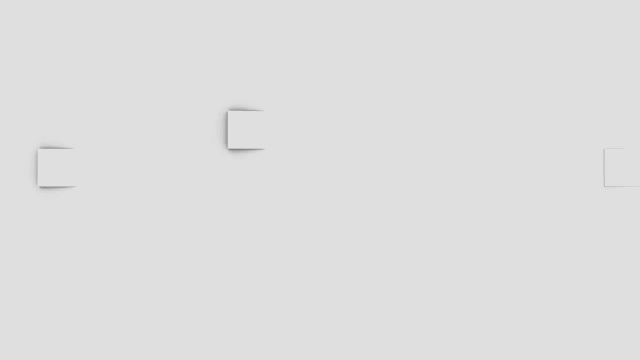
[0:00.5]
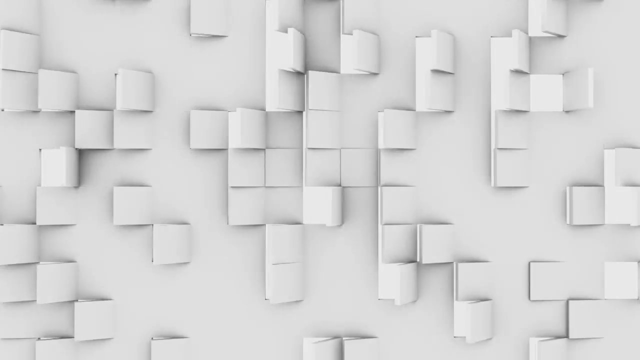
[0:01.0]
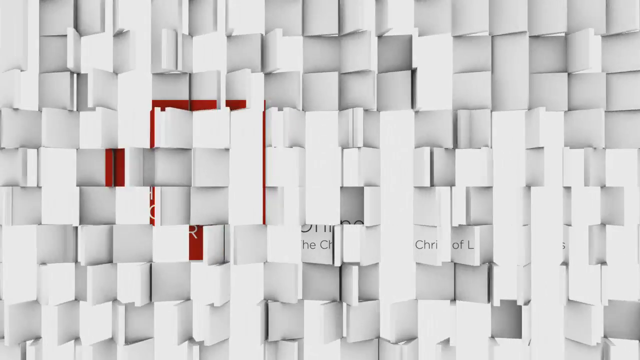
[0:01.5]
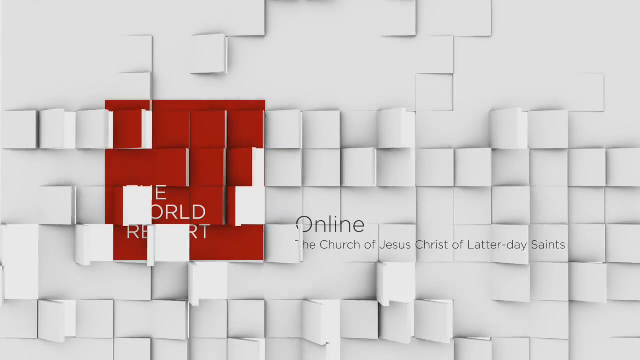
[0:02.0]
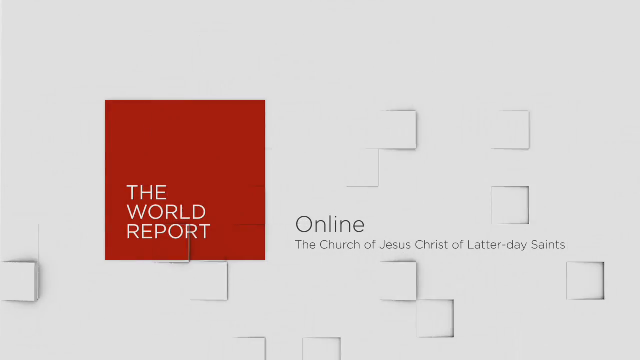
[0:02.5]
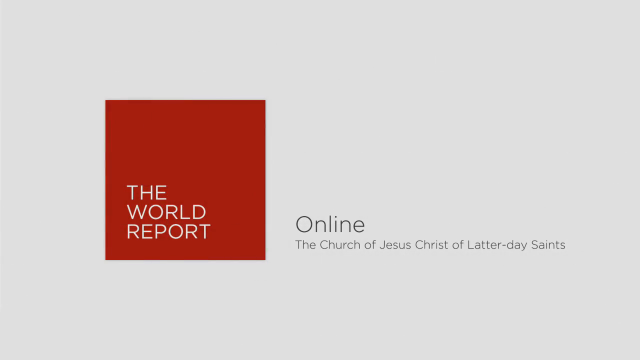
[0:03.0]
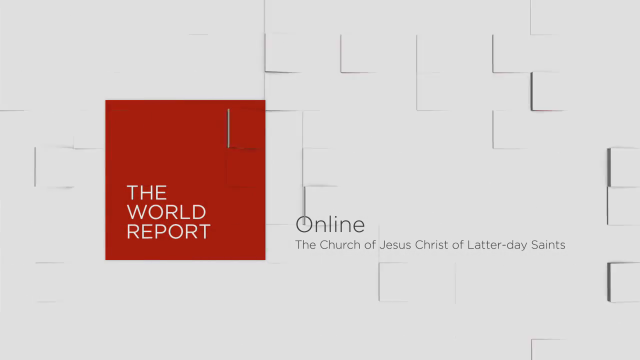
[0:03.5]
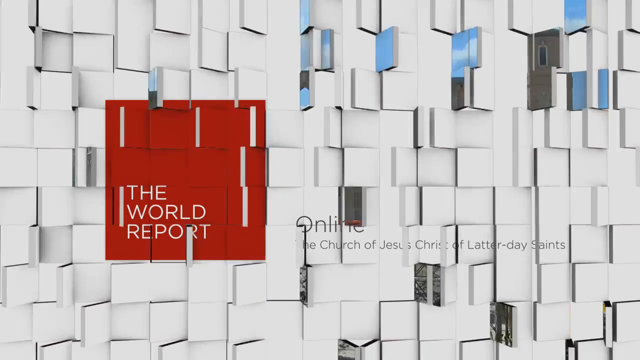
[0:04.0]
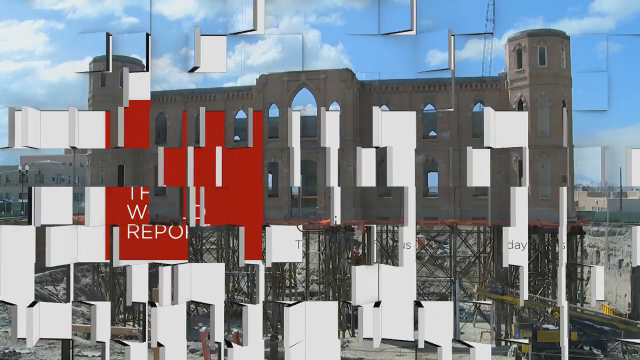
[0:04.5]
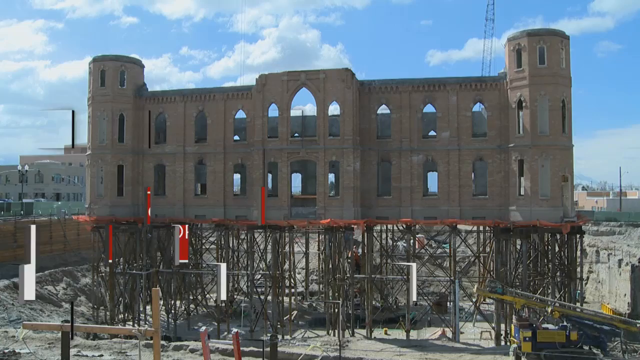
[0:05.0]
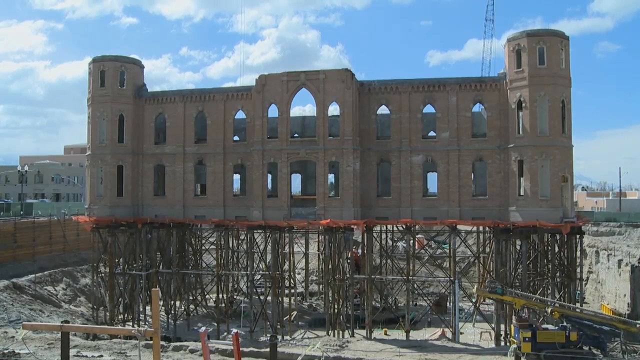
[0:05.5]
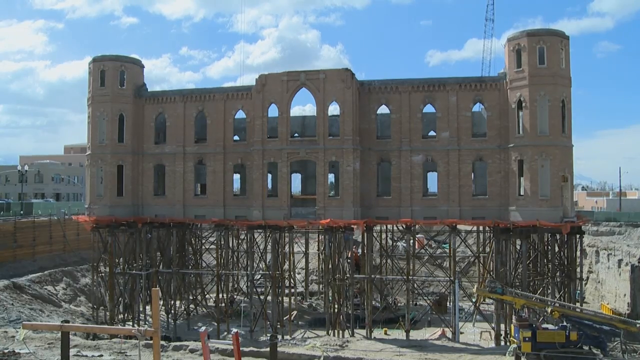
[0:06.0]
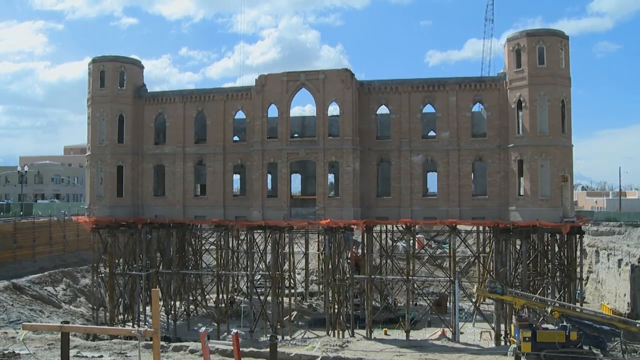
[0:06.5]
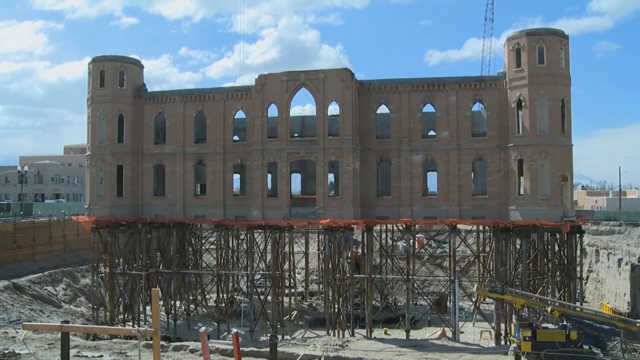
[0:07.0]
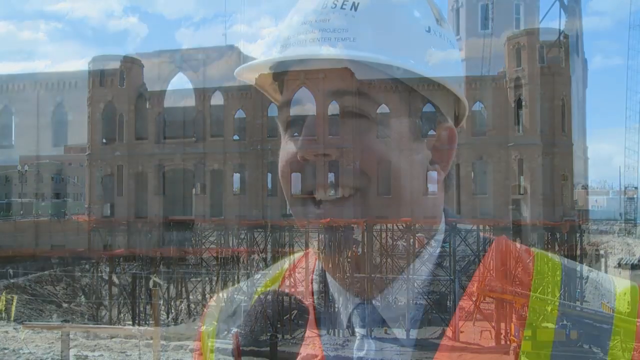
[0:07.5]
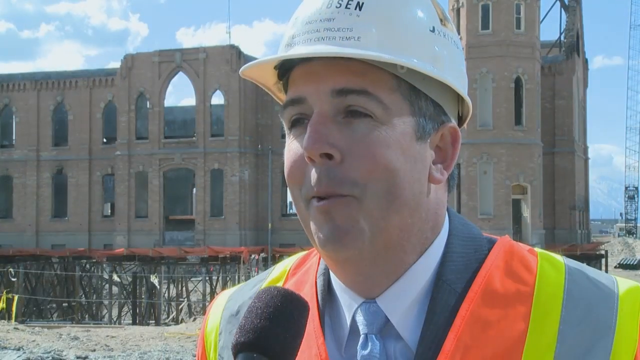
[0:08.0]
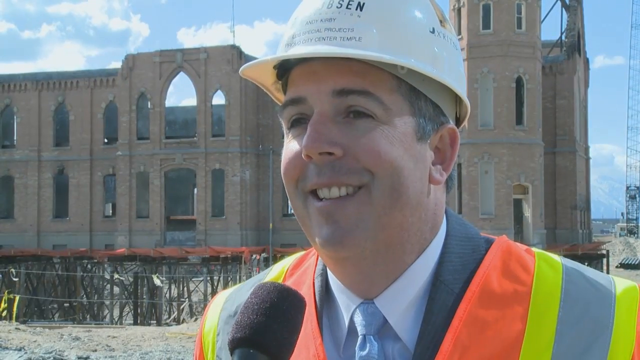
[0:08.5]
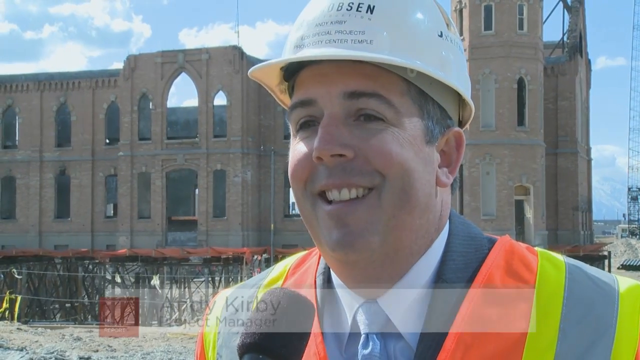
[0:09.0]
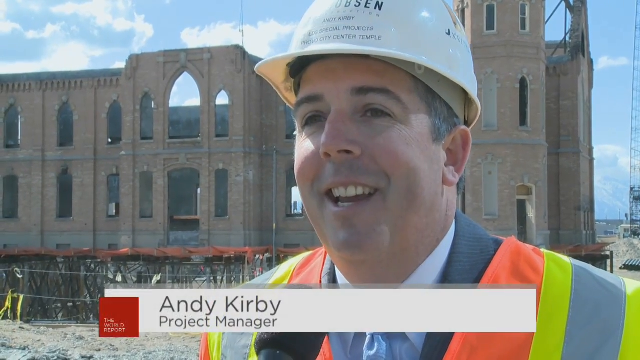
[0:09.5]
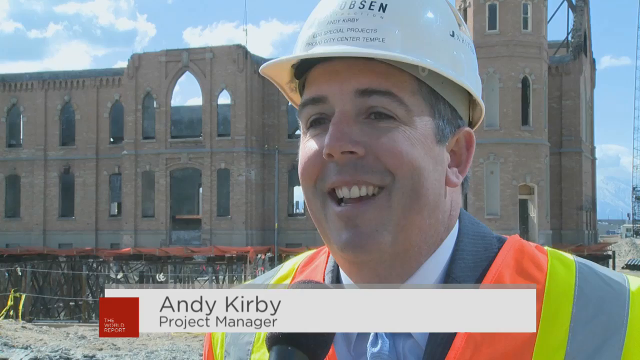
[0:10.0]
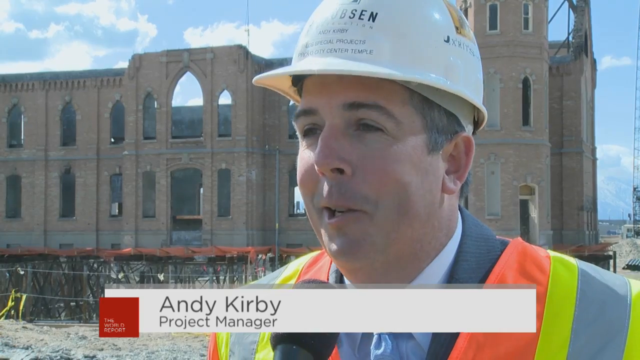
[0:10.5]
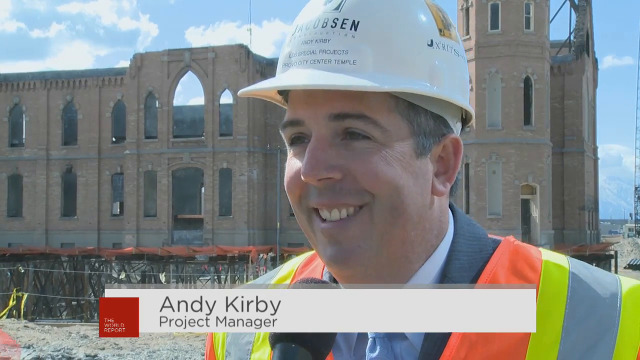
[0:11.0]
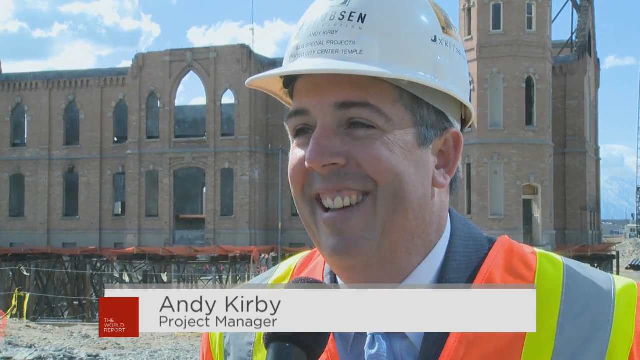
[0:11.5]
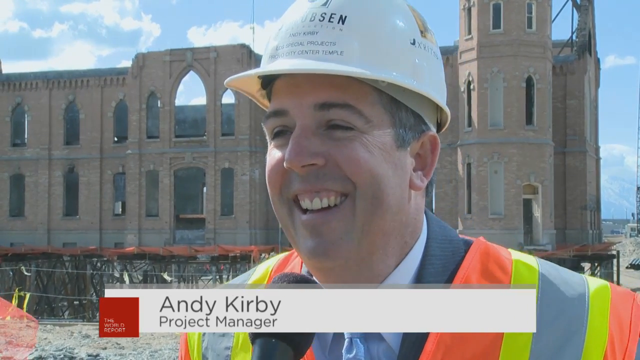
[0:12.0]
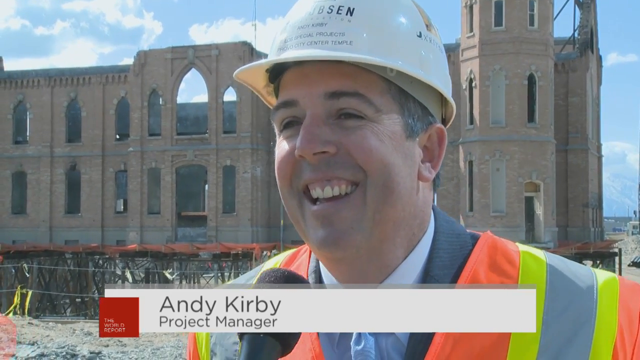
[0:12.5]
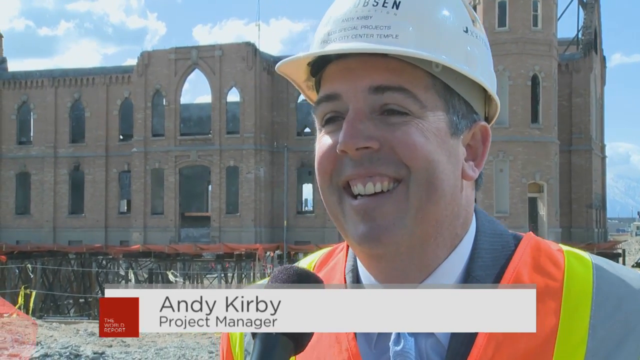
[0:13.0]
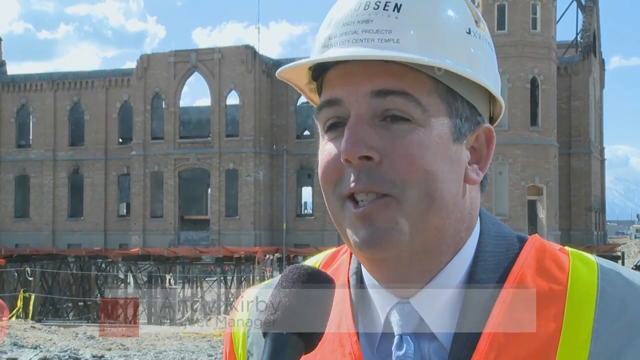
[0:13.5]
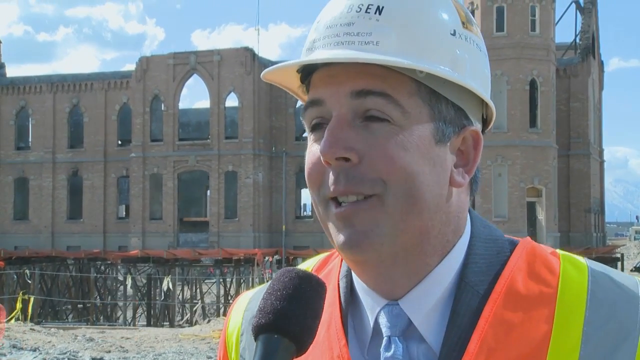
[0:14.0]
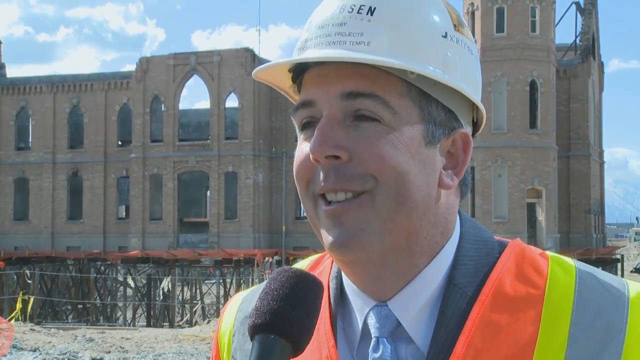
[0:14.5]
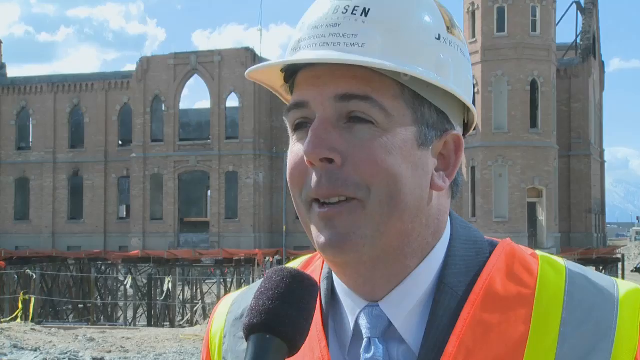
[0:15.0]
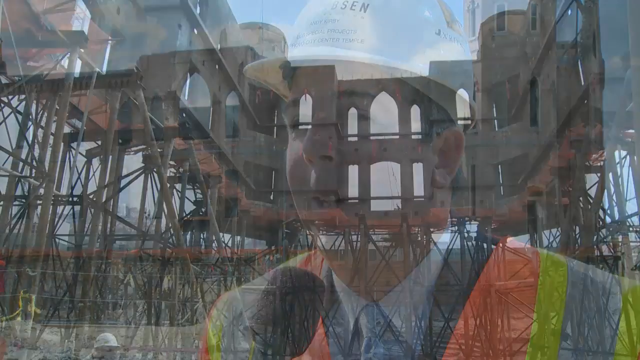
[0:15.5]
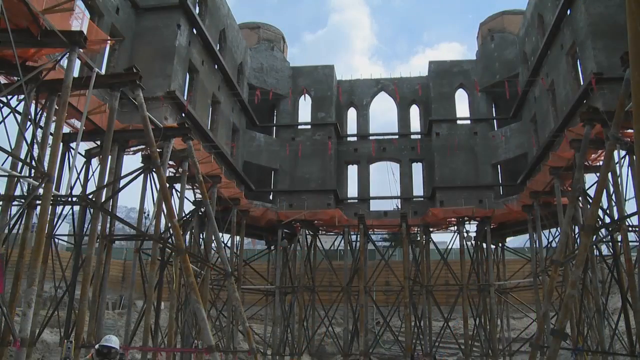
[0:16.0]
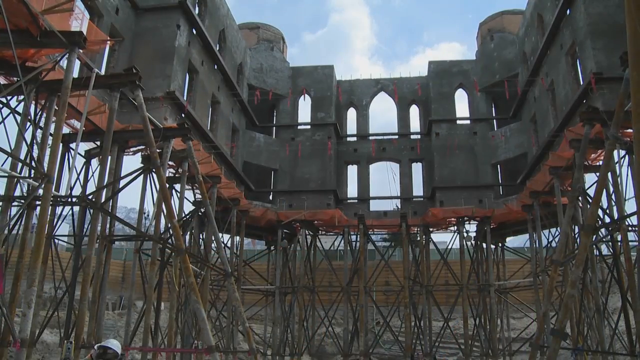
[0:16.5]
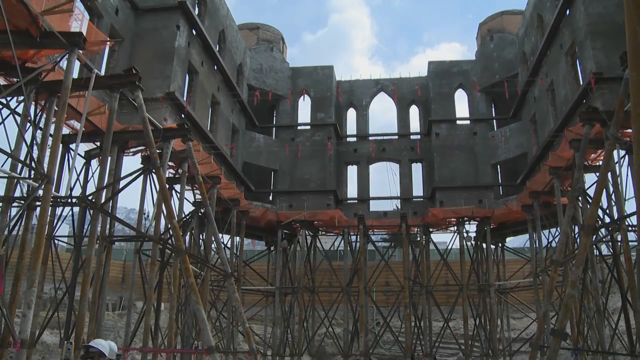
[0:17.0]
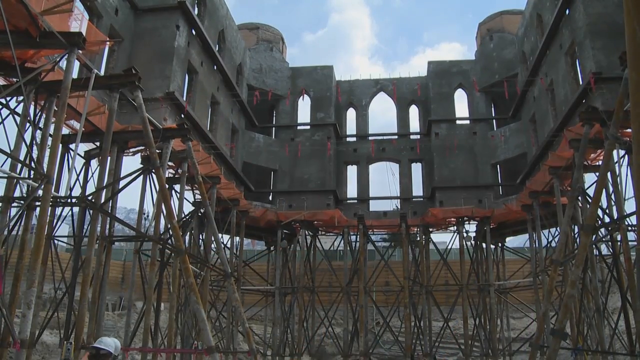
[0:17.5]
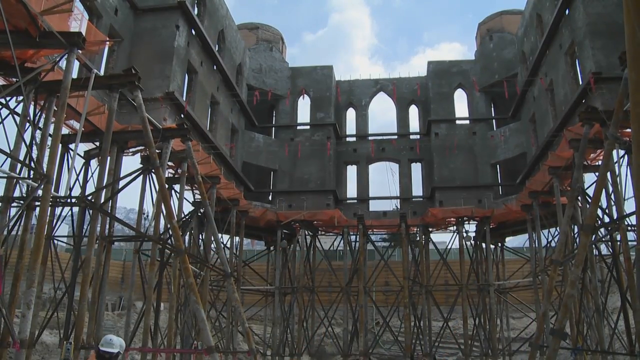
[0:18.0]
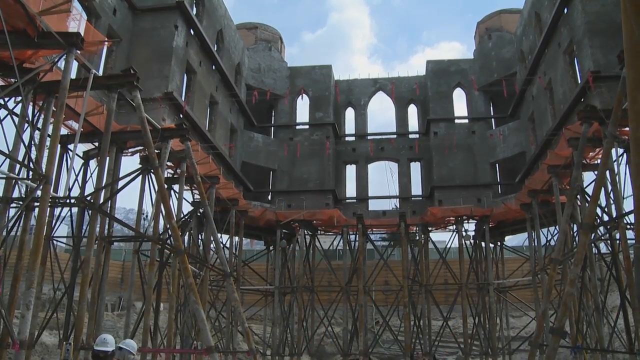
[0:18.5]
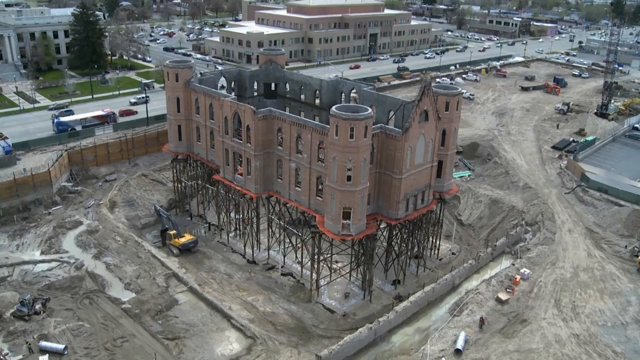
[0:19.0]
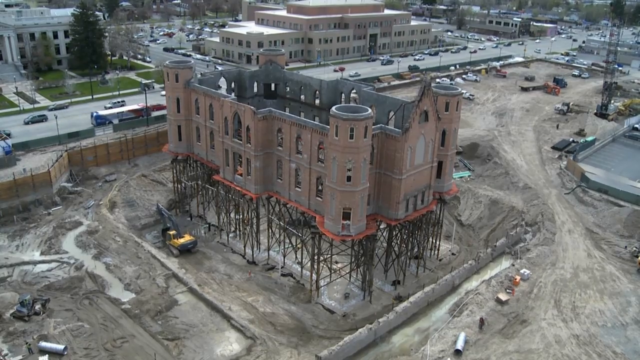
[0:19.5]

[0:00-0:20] The video centers on a project manager, Andy Kirby, and a building that looks like a castle. It is from the BBC and involves the Church of Jesus Christ; it looks like a church is being built. Outside, people talk to the project manager, who wears a white hard hat and a kind of safety jacket. The video keeps cutting away to various parts of the church: part of the church is built up with scaffolding underneath it. It cuts back to the project manager speaking, then to an interior shot of the church with the scaffolding, then to an exterior shot of the church and its surroundings, which look like a street with cars. There seem to be many cutaways to images of the church under scaffolding; they are possibly putting in a secondary floor. It also cuts to a title reading "online, the Church of Jesus Christ Latter-day Saints," and keeps cutting back and forth between these segments.